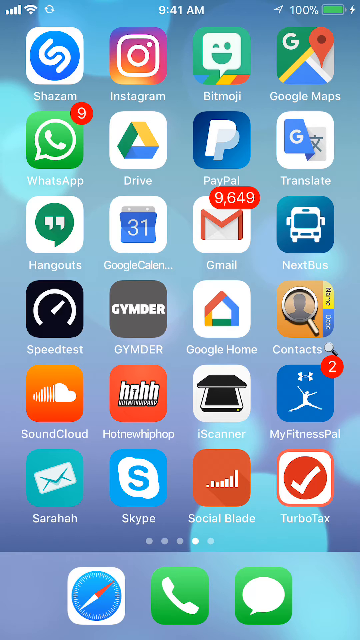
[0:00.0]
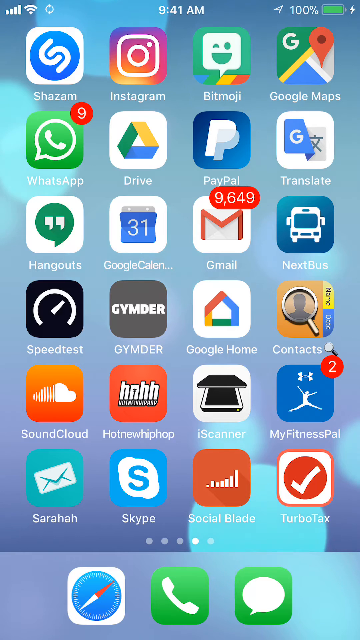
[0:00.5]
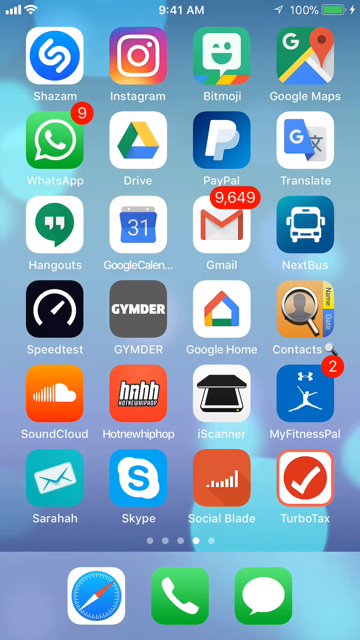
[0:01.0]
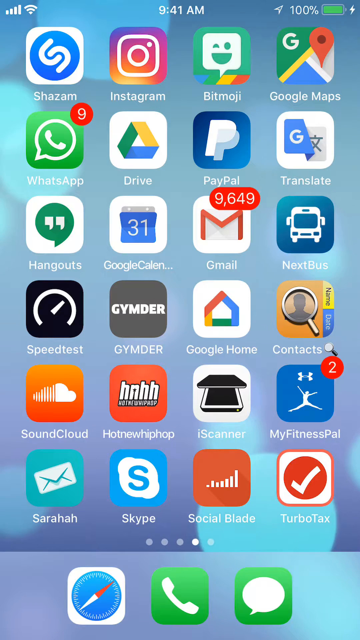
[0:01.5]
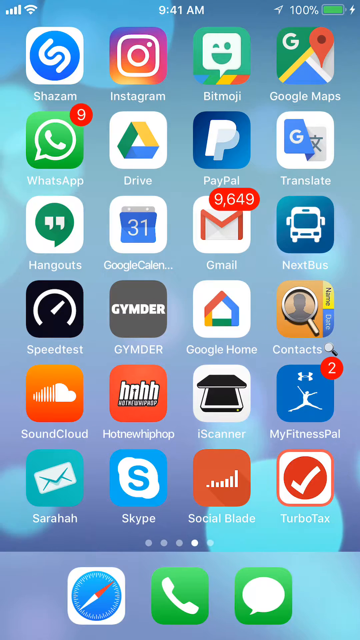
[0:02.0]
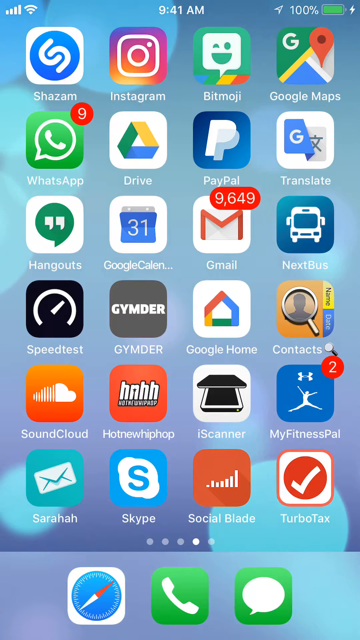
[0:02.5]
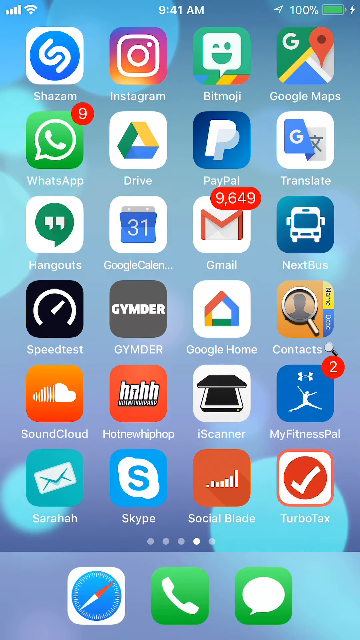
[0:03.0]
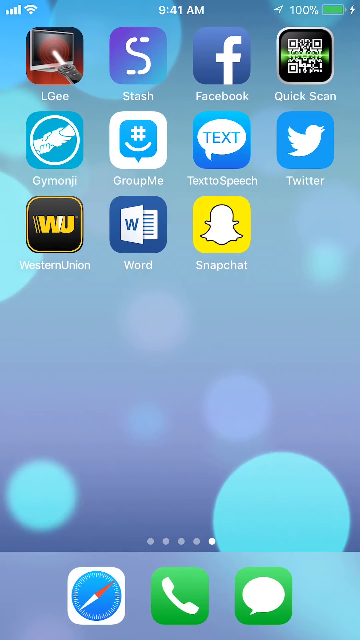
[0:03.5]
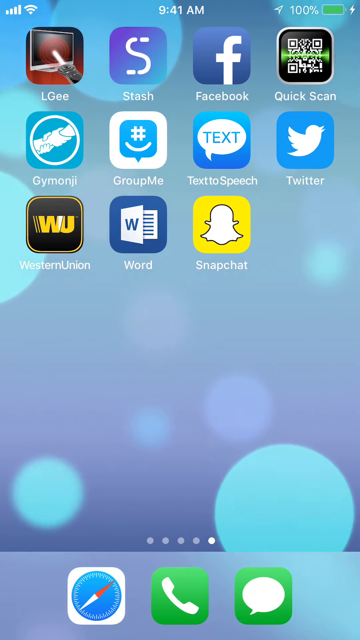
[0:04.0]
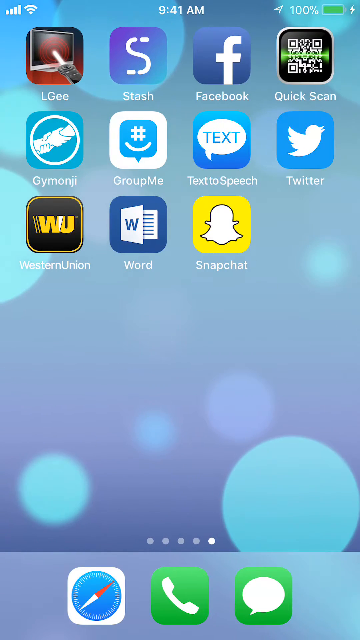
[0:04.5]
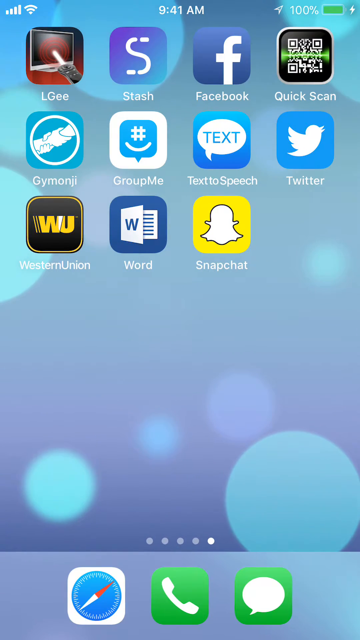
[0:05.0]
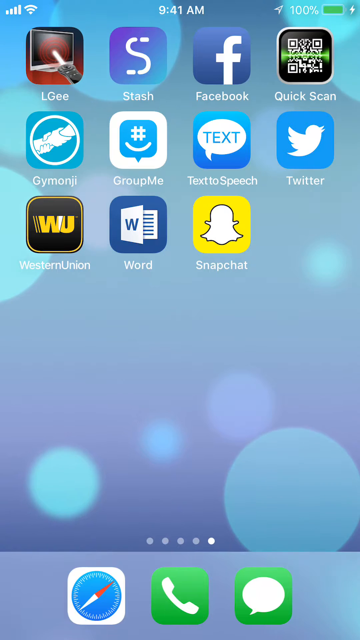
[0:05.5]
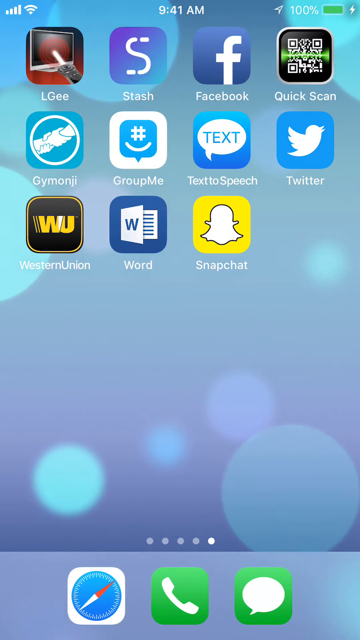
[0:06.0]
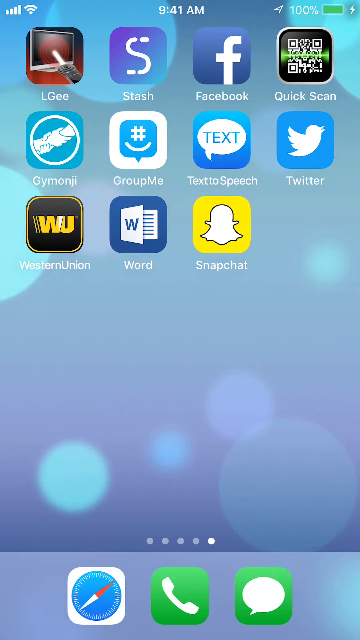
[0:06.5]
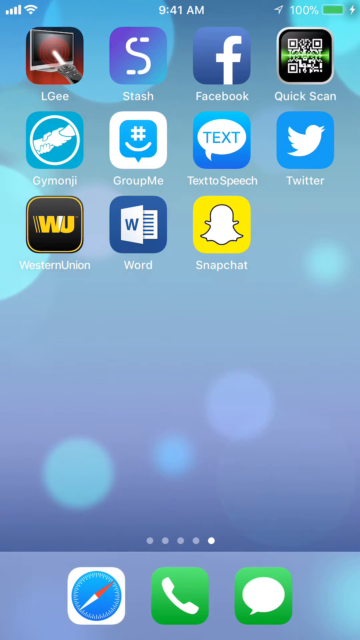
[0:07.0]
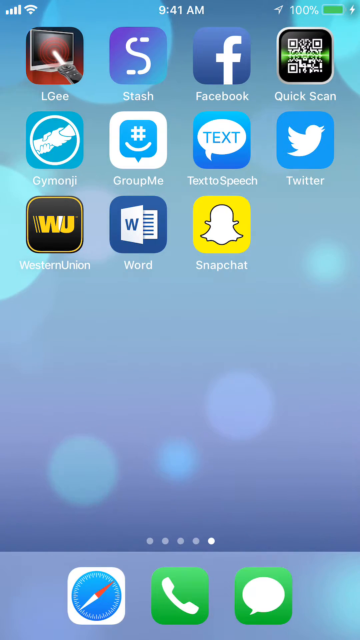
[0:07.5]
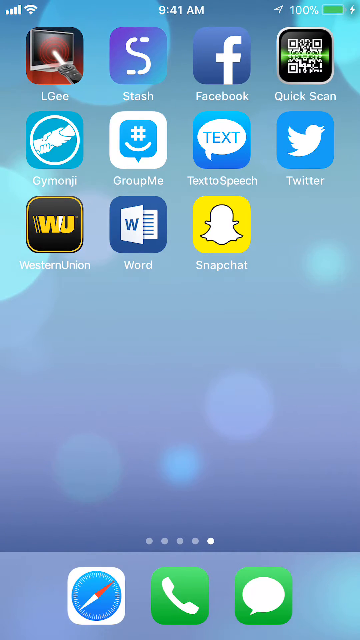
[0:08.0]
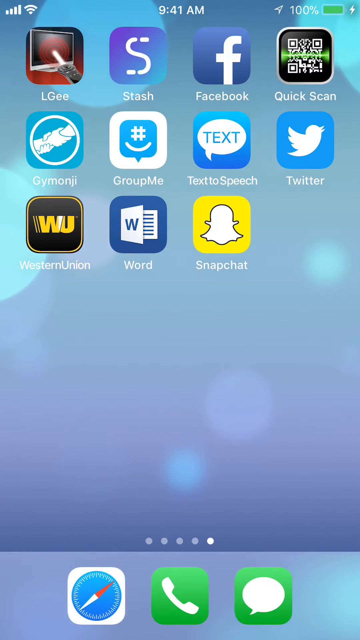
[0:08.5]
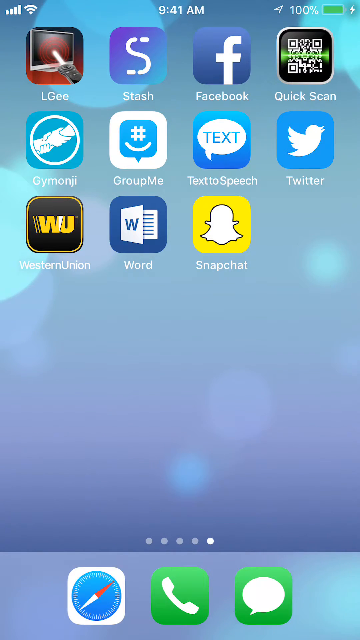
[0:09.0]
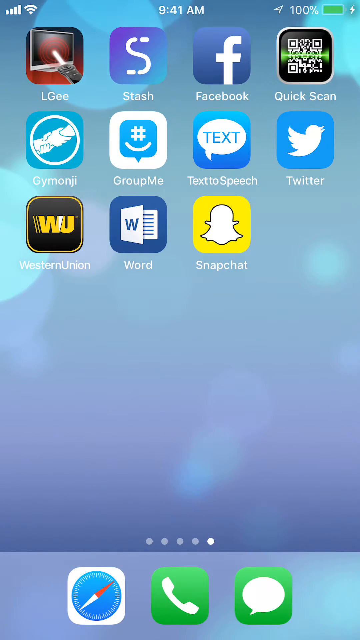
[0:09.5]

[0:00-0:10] The video is a screen recording of an iPhone home screen with several apps displayed. At the very top, the time reads 9:41 AM and the battery is at 100 percent. The installed apps include Shazam, Instagram, Bitmoji, Google Maps, WhatsApp, Google Drive, PayPal, Google Translate, Google Hangouts, Google Calendar and Gmail.